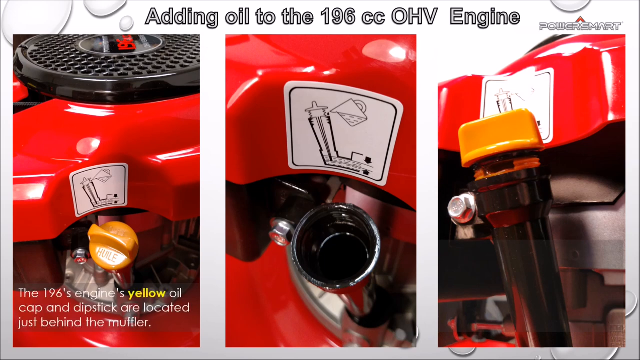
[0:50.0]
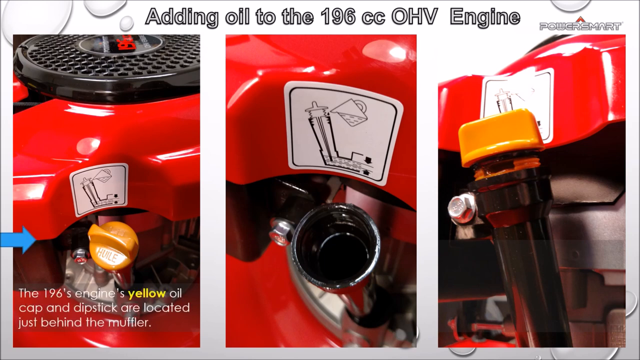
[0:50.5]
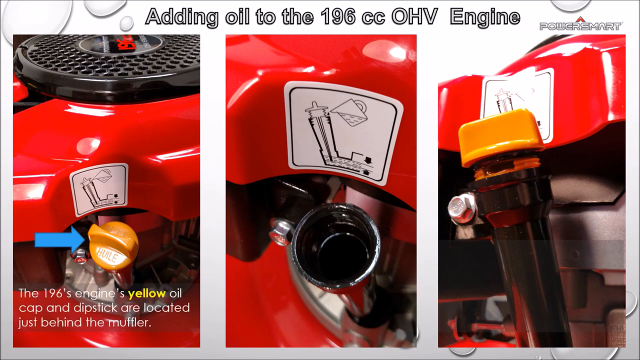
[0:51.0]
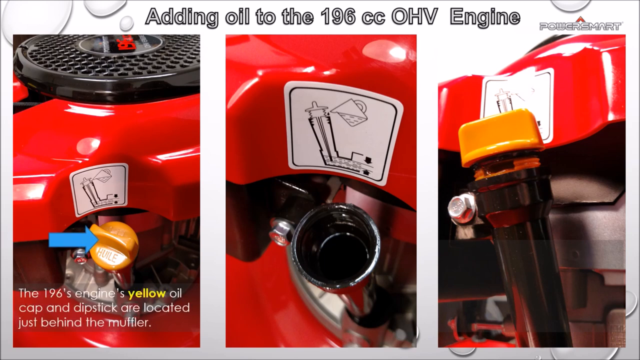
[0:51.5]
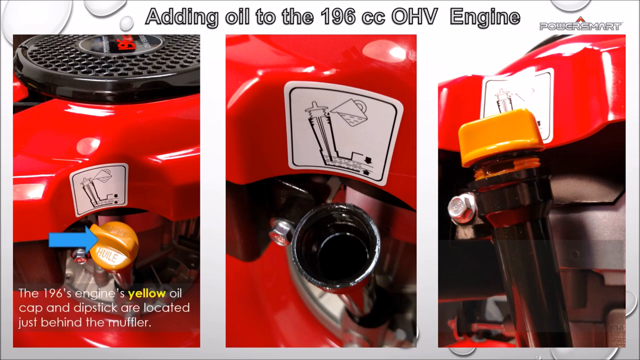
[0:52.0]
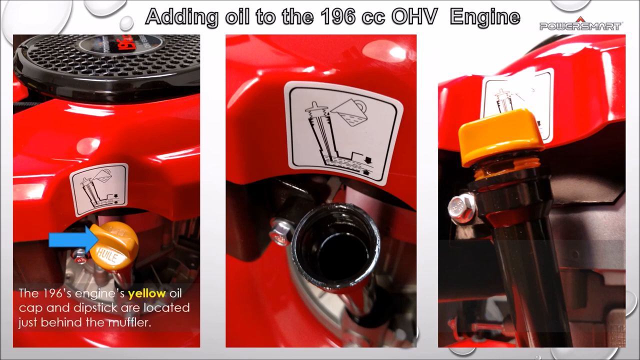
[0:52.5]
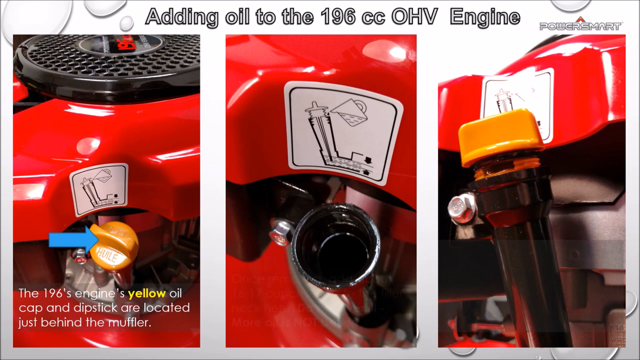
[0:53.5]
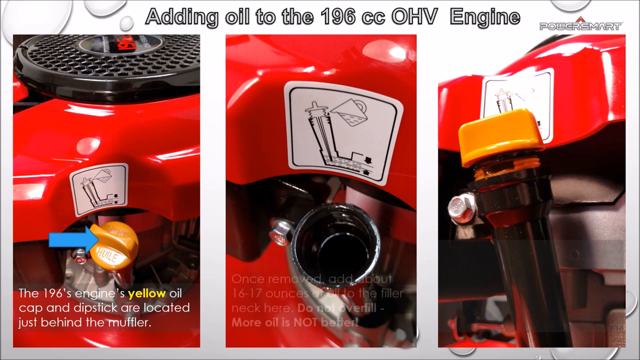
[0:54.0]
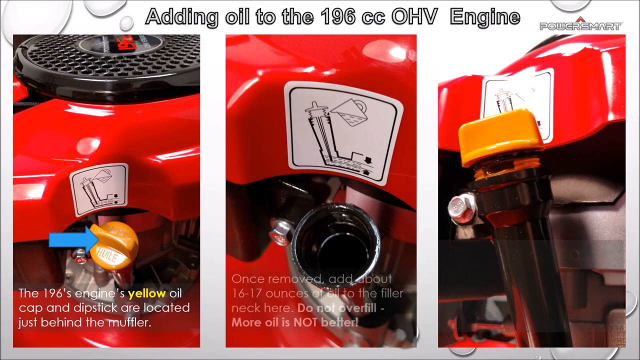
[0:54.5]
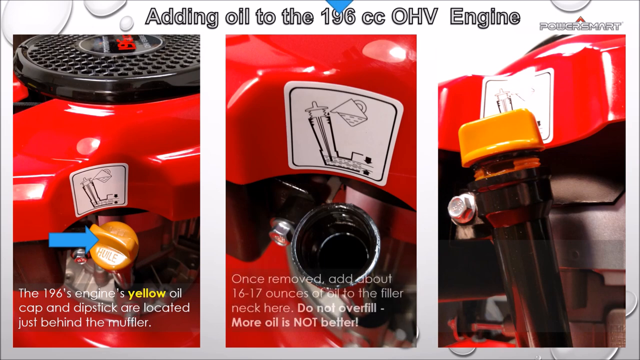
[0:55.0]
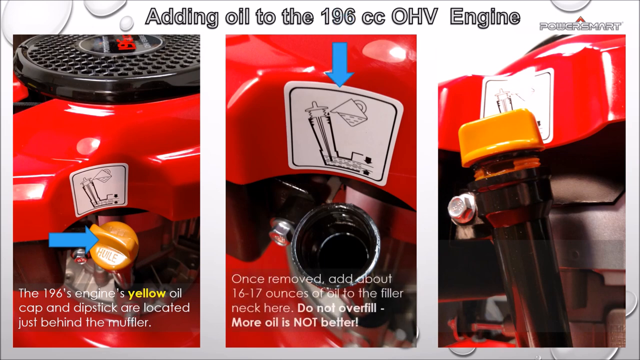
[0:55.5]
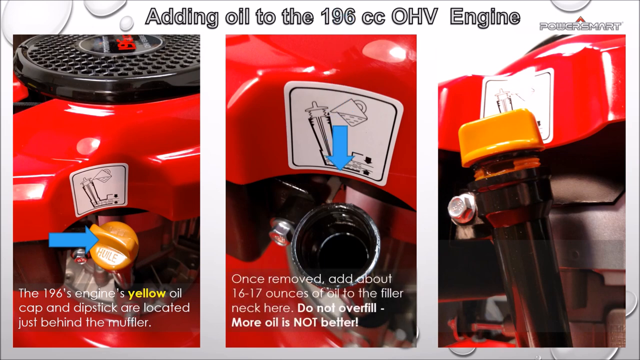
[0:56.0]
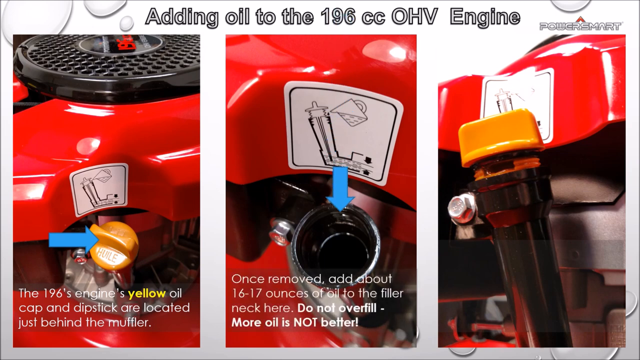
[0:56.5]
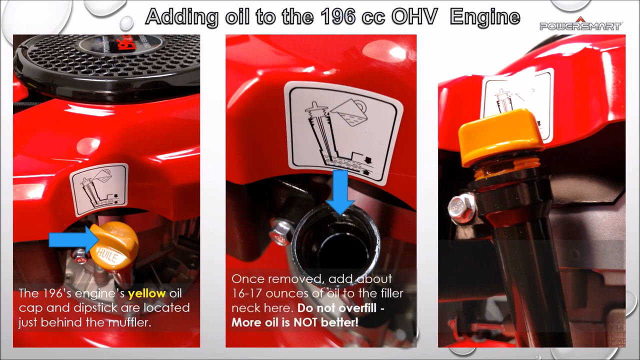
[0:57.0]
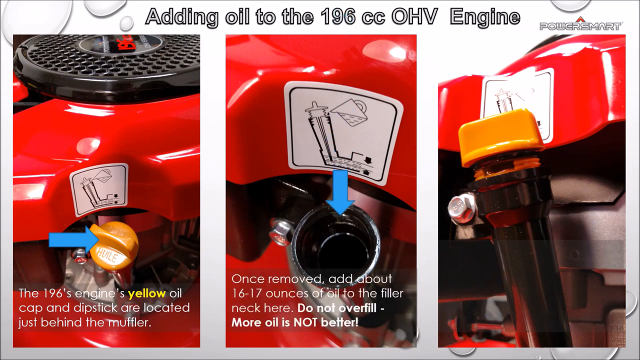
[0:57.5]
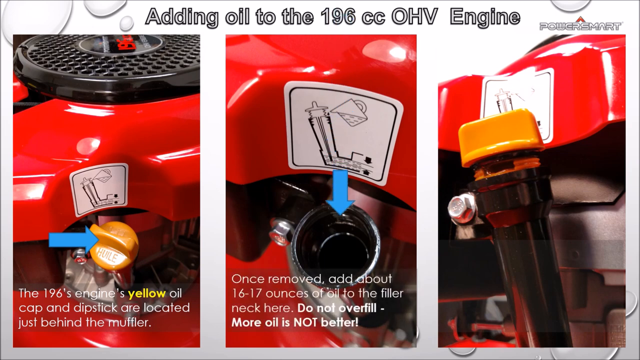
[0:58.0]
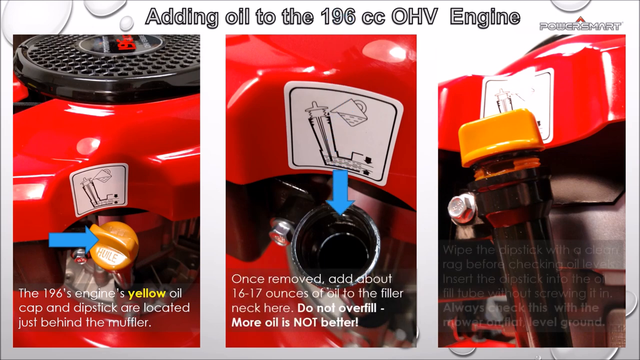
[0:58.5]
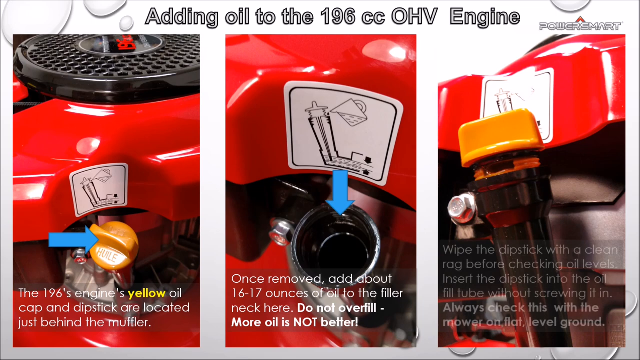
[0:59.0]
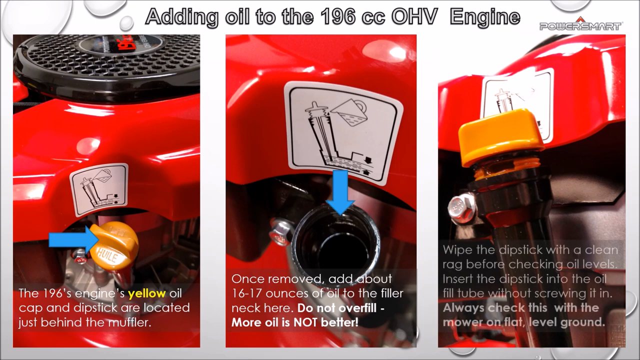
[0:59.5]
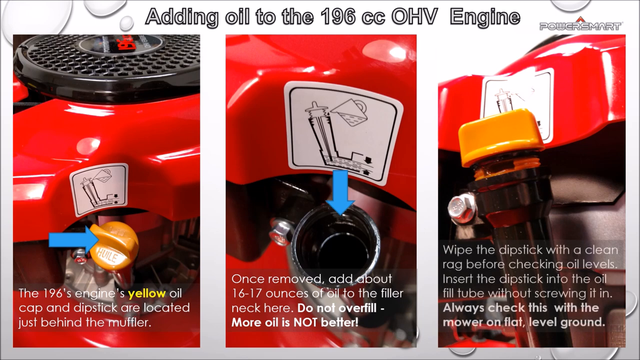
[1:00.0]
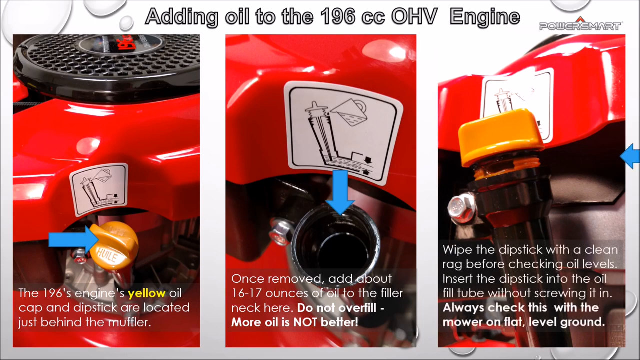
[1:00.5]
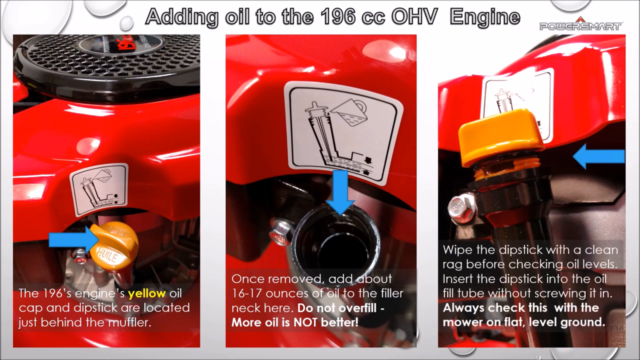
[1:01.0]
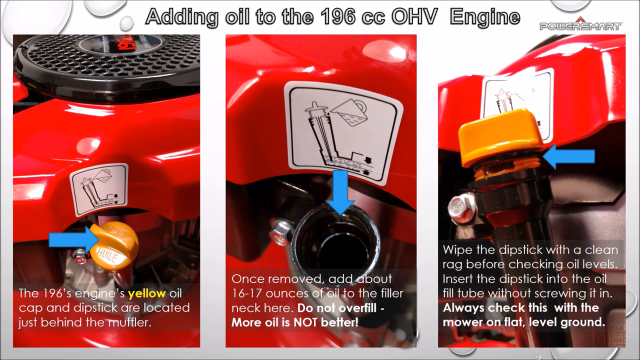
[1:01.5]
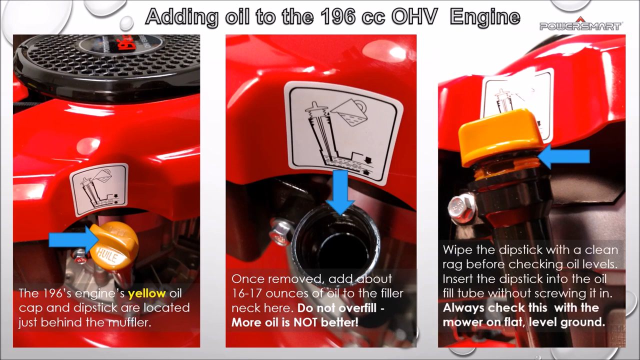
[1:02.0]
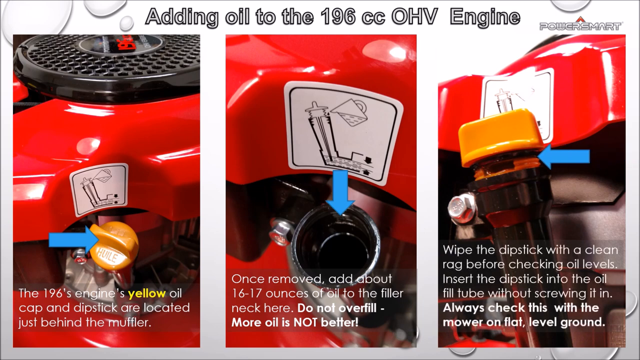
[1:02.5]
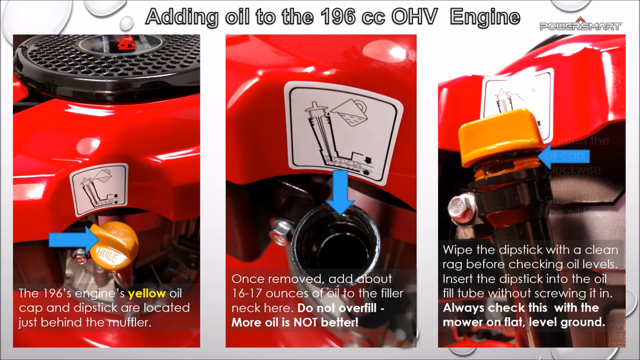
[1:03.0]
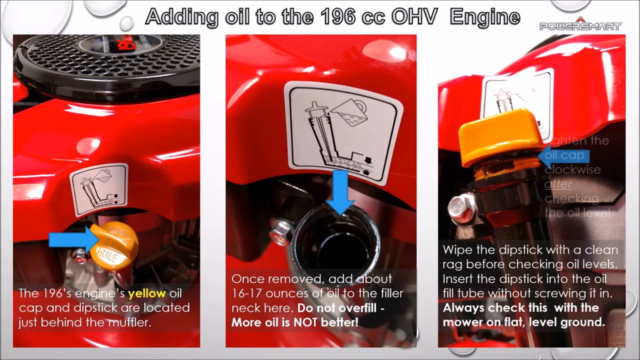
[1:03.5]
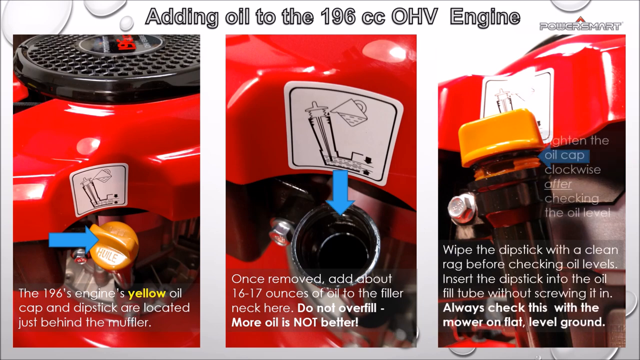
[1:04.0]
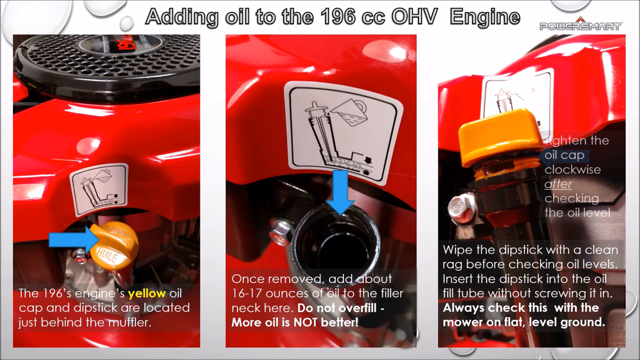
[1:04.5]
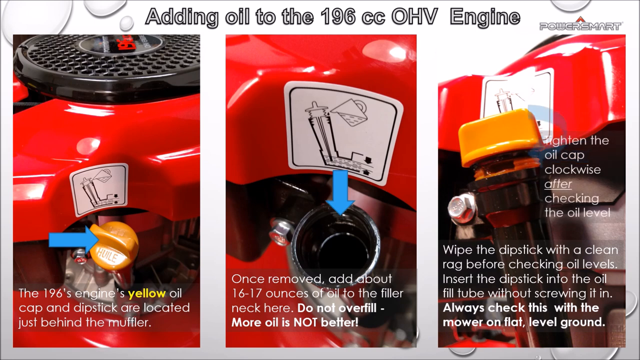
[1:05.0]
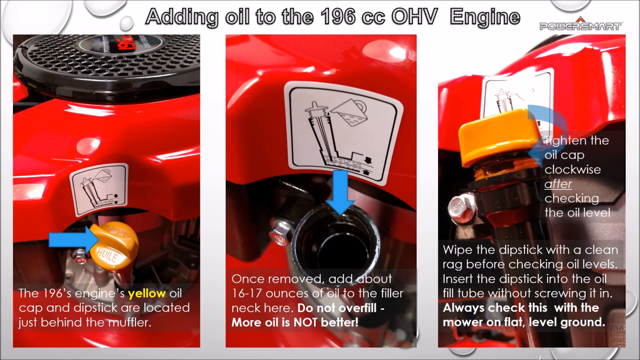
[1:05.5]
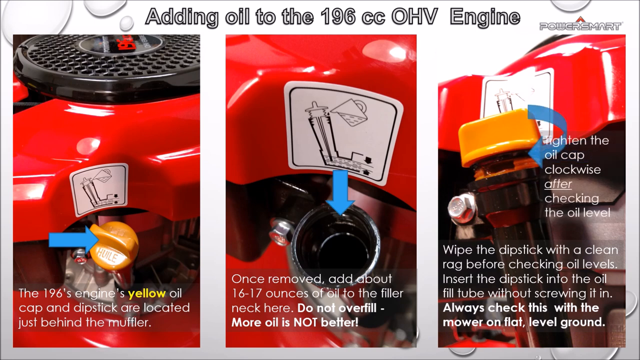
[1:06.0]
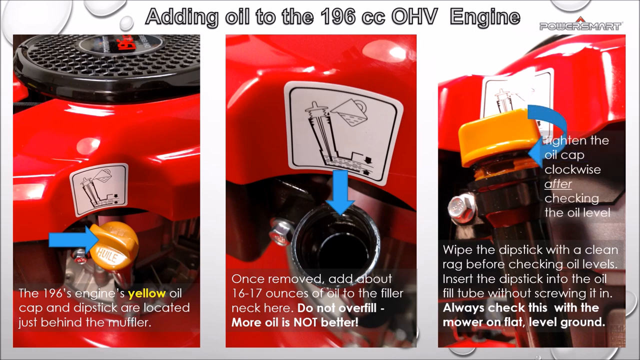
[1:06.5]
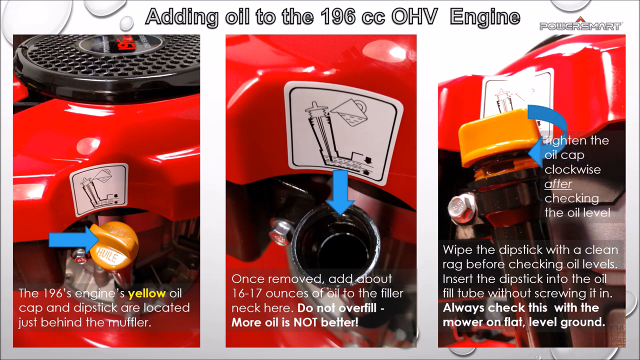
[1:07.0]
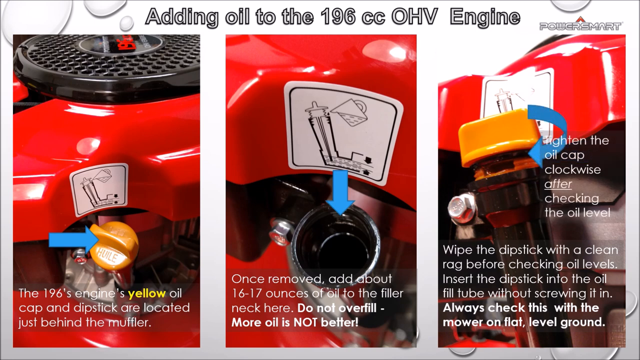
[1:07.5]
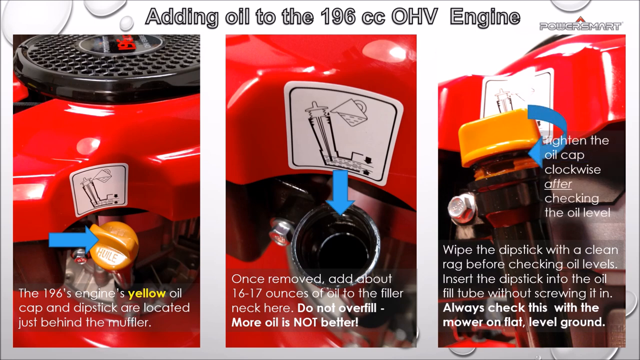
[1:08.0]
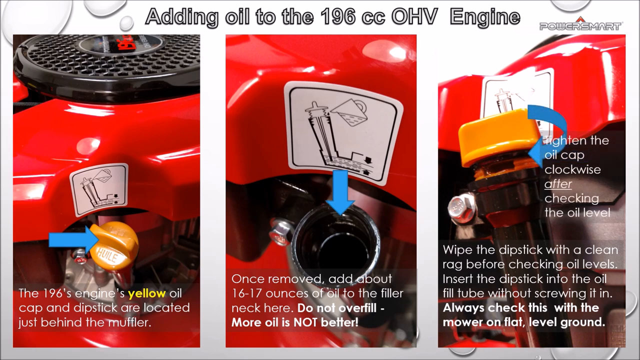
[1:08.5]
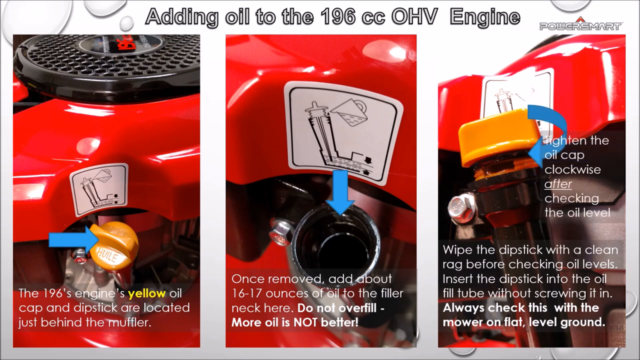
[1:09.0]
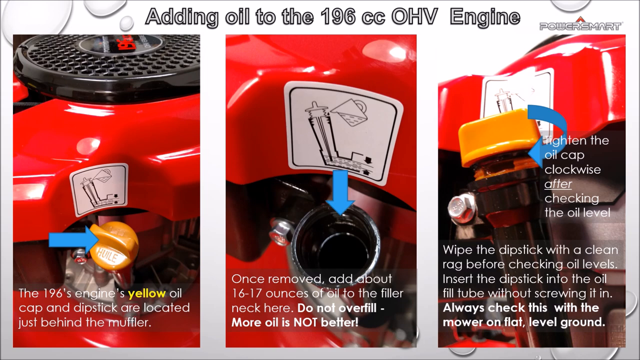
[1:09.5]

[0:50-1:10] Three pictures of the same red lawnmower are shown: the first has the lawnmower oil pipe with an orange cap on it, the second shows the cap removed, and the third shows the cap put back on. At the top it says "adding oil to the 196CC OHV engine", and the PowerSmart logo is at the top right. At the bottom left it says "the 196 engine's yellow oil cap and dipstick are located just behind the muffler", with the word "yellow" colored yellow. A blue arrow enters from the left side of the screen and points at the first picture with the cap on. A second blue arrow comes down from the top, pointing at the second picture where the cap is removed, and on the second picture the words "once removed, add about 16 to 17 ounces of oil to the filler neck here. Do not overfill. More oil is not better." appear. On the right picture the words "wipe the dipstick with a clean rag before checking oil levels, insert the dipstick into the oil fill tube without screwing it in, always check this with a mower on flat level ground" appear. A blue arrow then appears from the right, pointing at the third picture, and transforms into a clockwise shape around the third picture where the orange cap is. The words "tighten the oil cap clockwise after checking the oil level" appear.